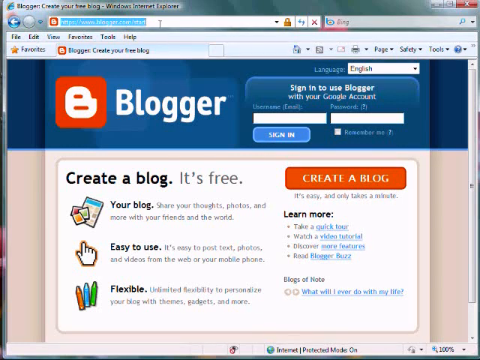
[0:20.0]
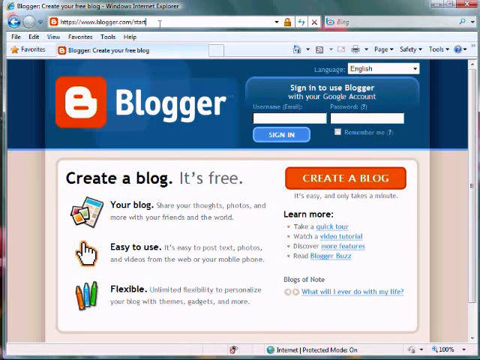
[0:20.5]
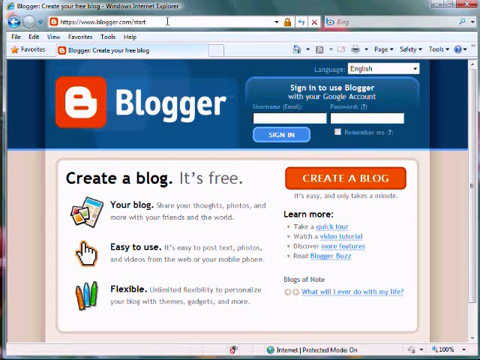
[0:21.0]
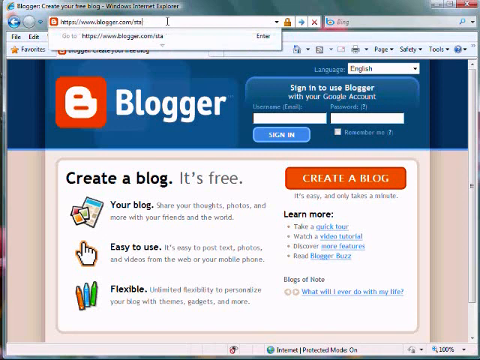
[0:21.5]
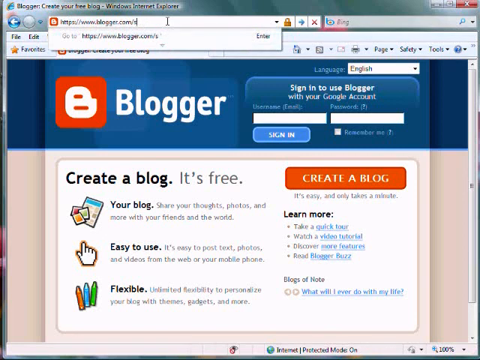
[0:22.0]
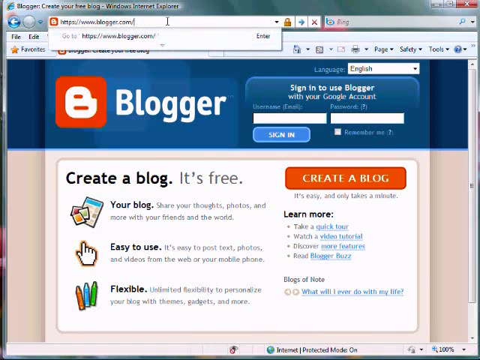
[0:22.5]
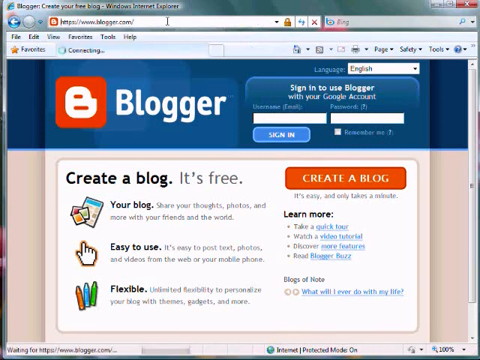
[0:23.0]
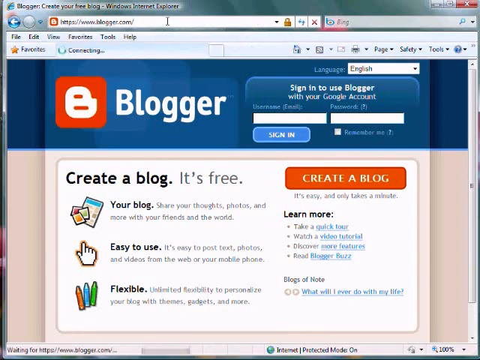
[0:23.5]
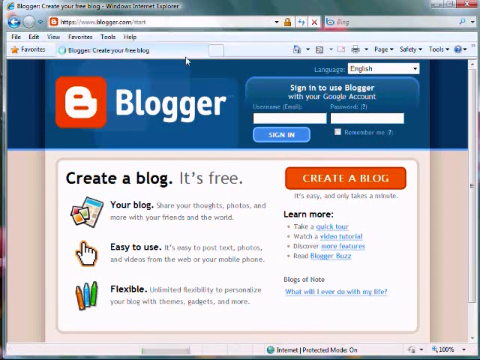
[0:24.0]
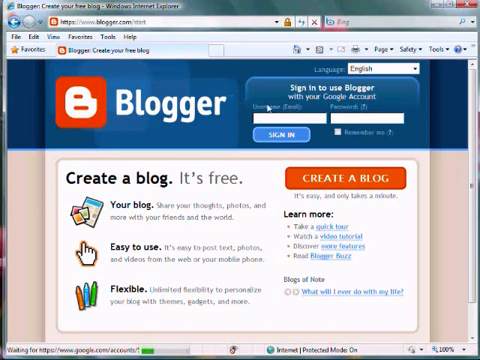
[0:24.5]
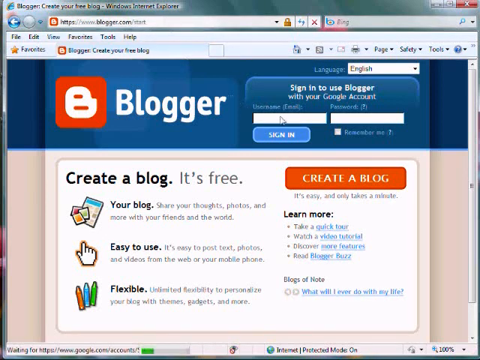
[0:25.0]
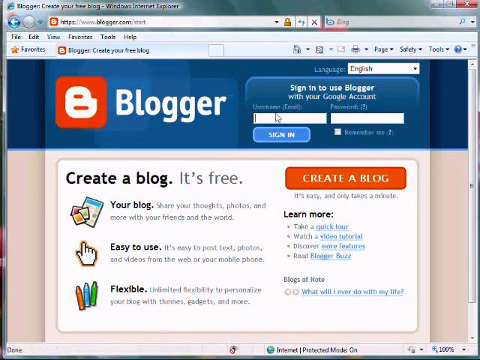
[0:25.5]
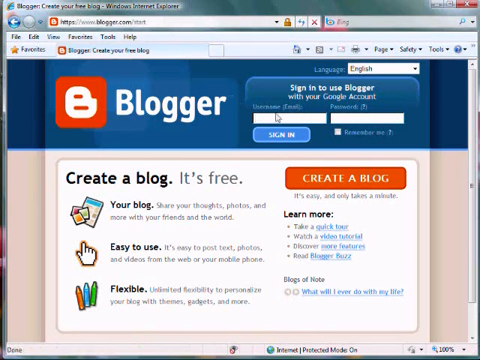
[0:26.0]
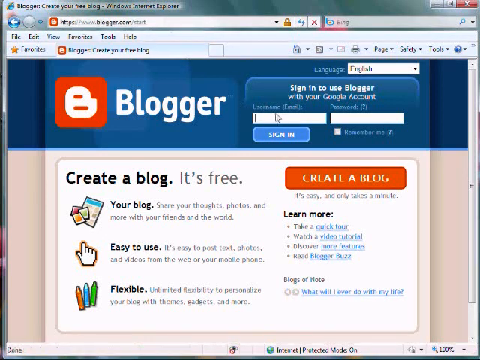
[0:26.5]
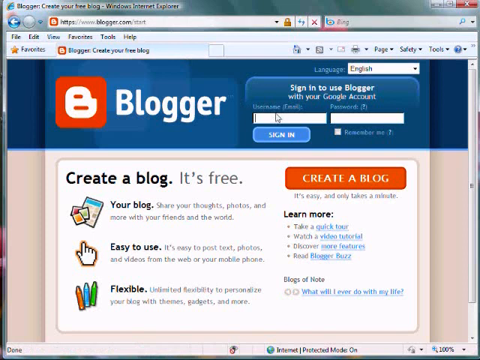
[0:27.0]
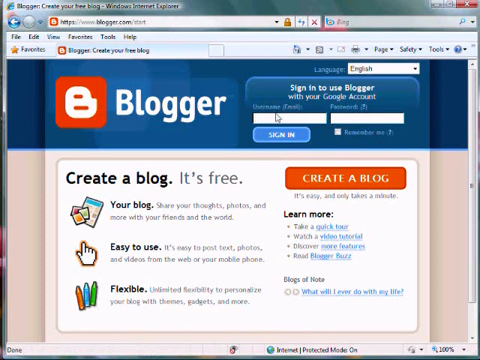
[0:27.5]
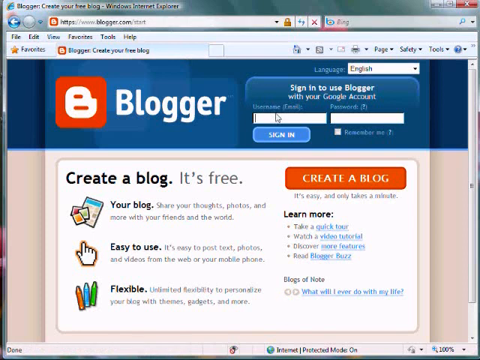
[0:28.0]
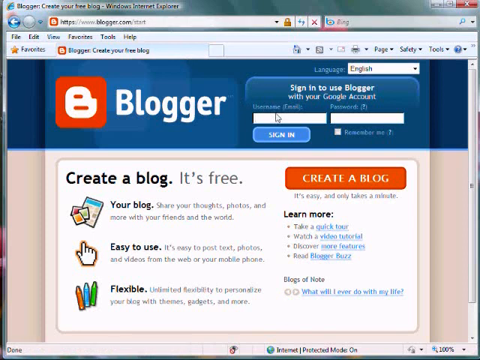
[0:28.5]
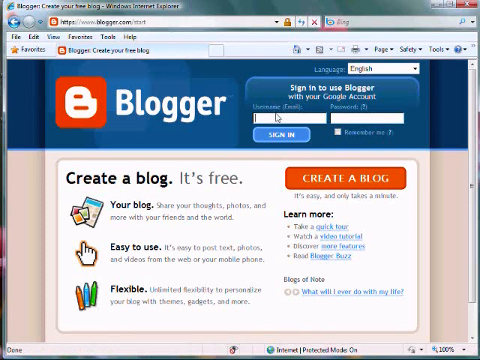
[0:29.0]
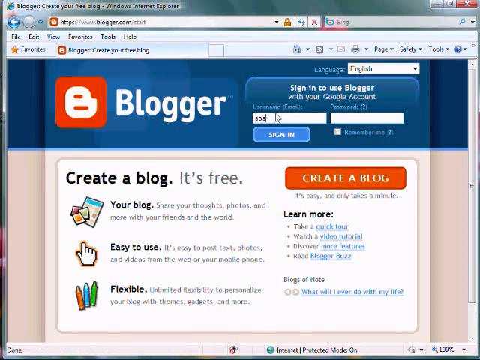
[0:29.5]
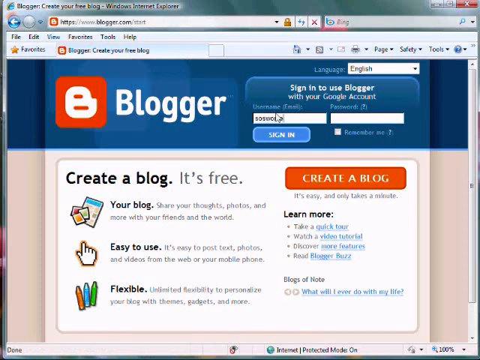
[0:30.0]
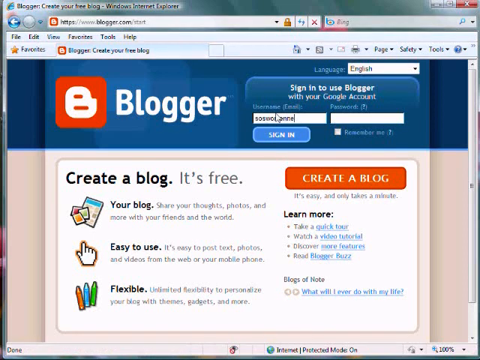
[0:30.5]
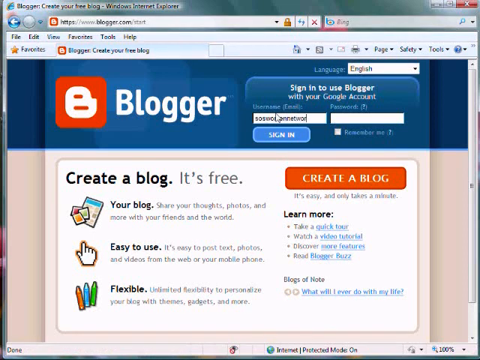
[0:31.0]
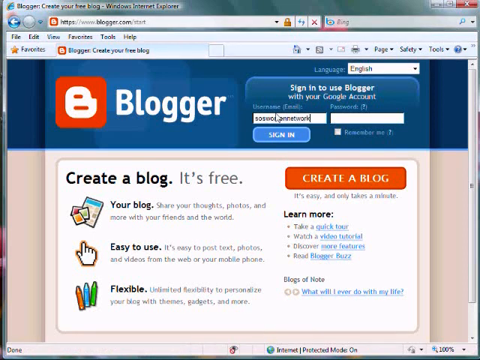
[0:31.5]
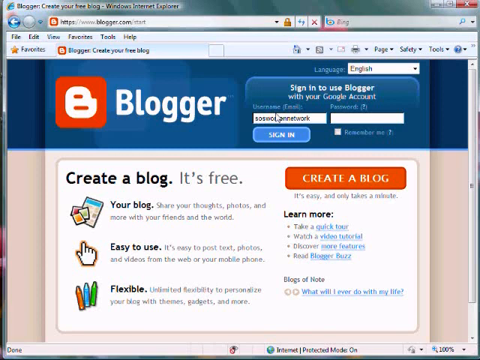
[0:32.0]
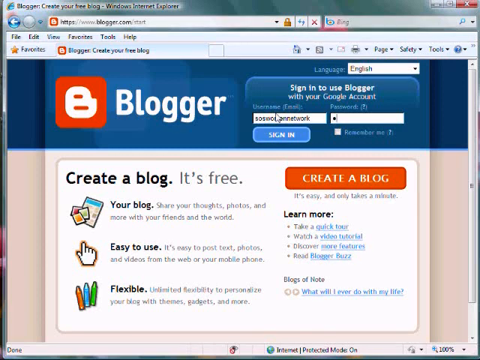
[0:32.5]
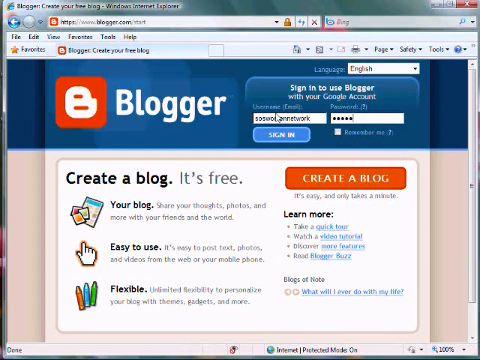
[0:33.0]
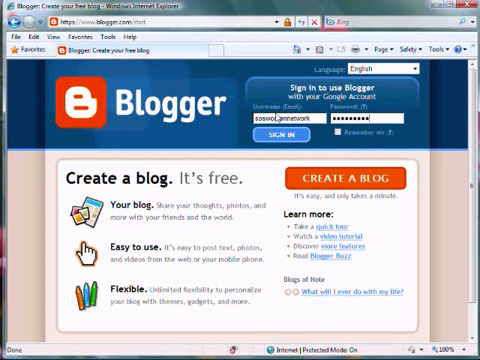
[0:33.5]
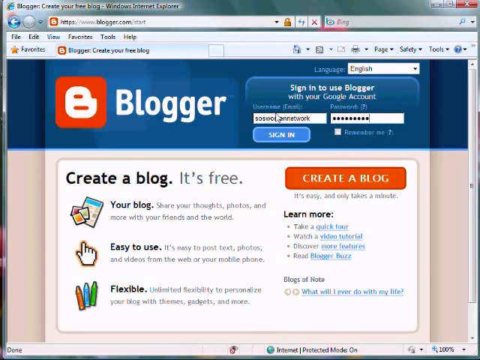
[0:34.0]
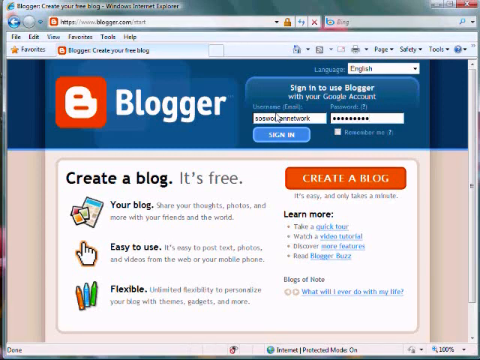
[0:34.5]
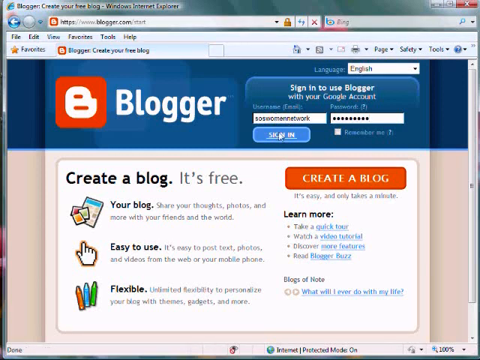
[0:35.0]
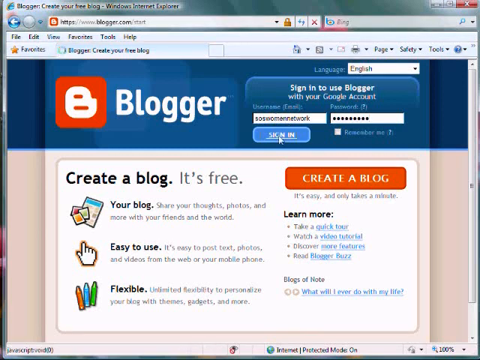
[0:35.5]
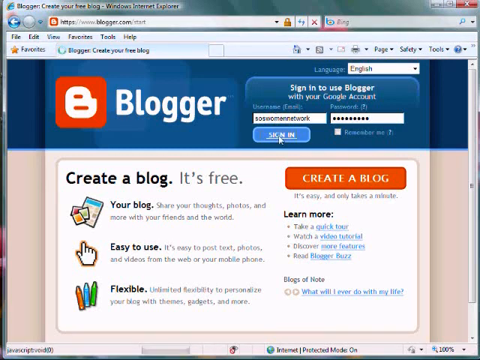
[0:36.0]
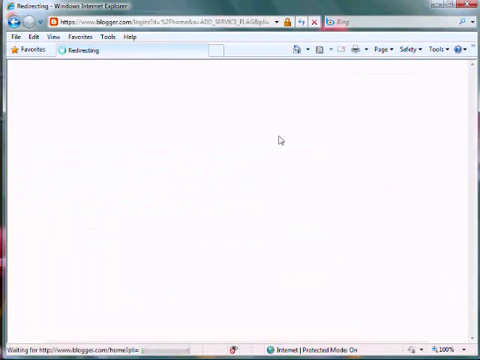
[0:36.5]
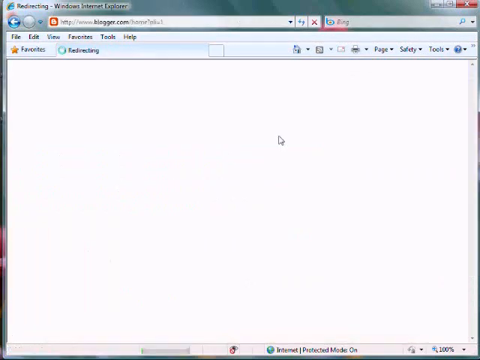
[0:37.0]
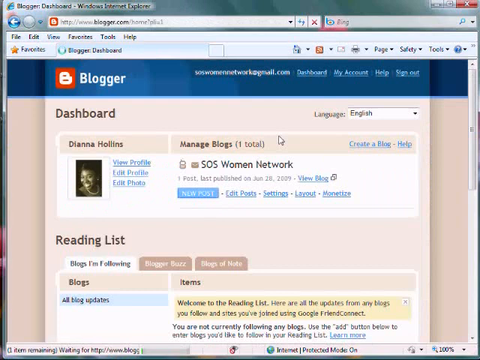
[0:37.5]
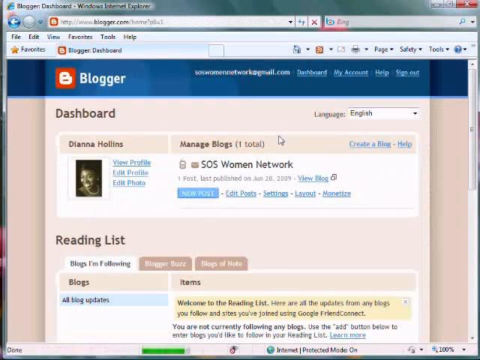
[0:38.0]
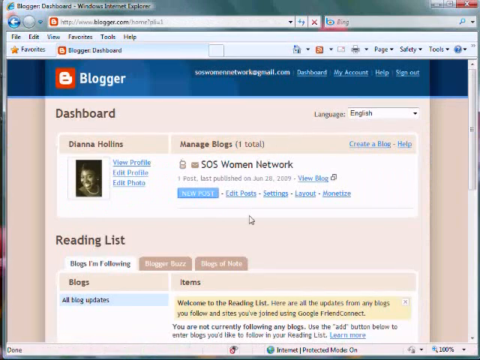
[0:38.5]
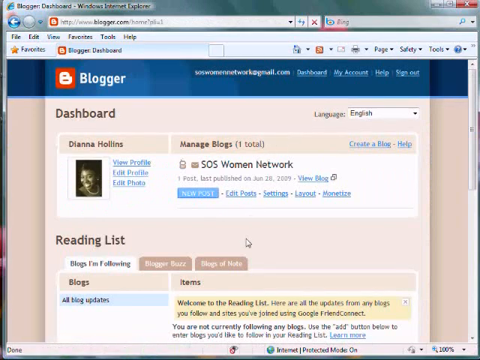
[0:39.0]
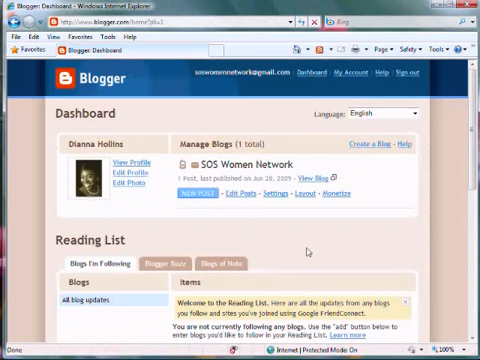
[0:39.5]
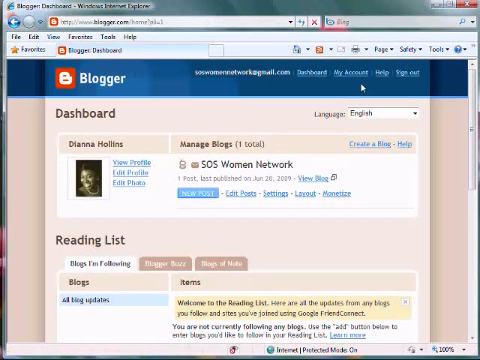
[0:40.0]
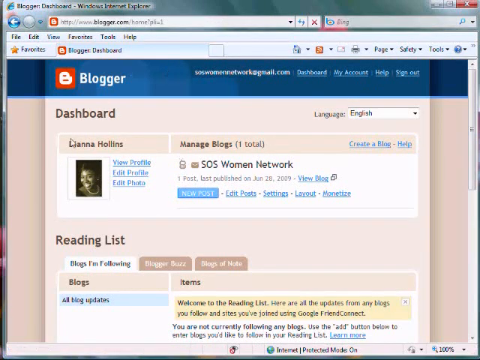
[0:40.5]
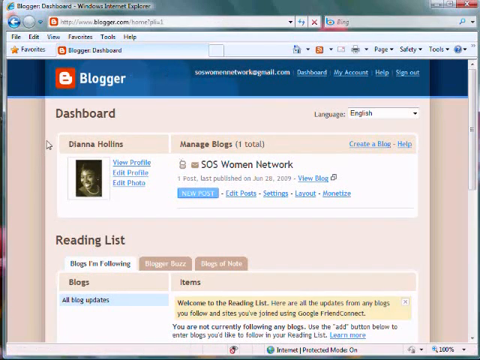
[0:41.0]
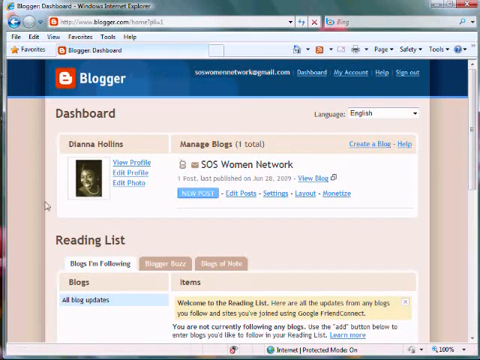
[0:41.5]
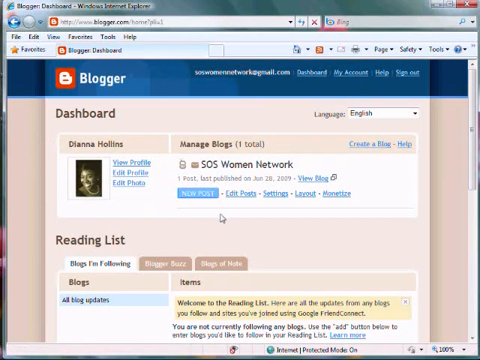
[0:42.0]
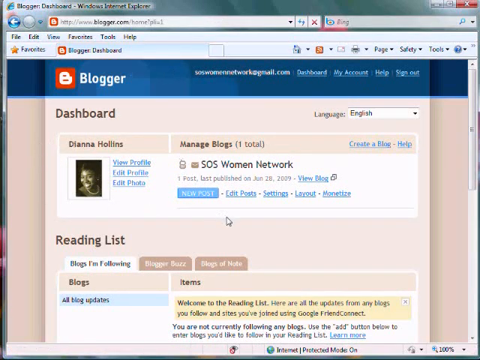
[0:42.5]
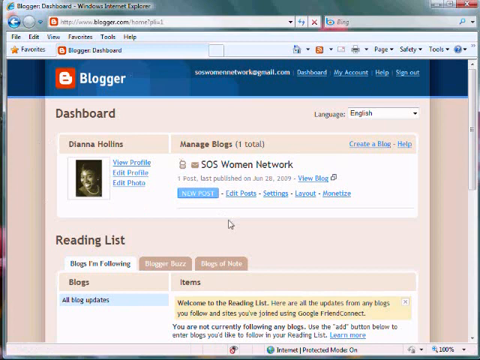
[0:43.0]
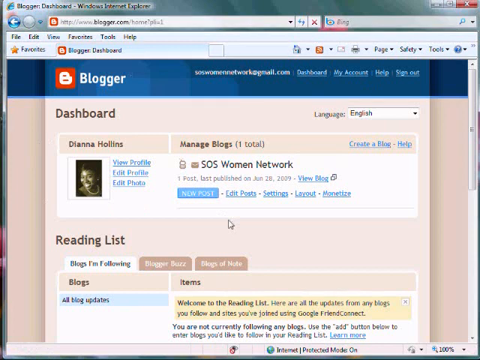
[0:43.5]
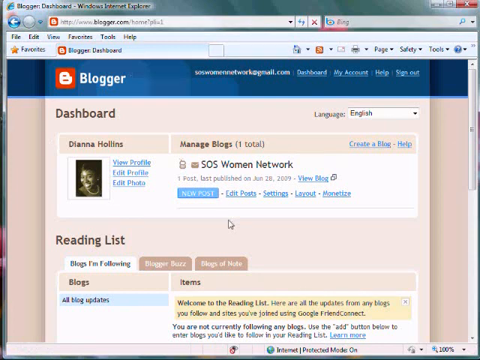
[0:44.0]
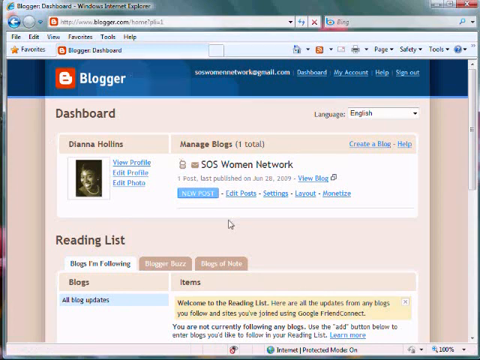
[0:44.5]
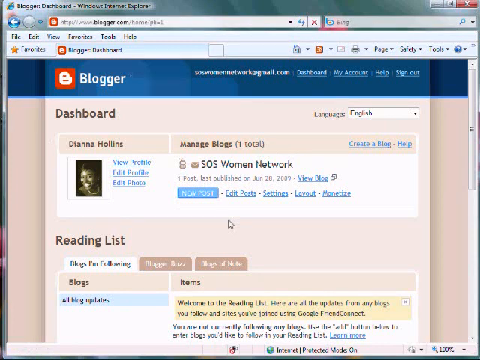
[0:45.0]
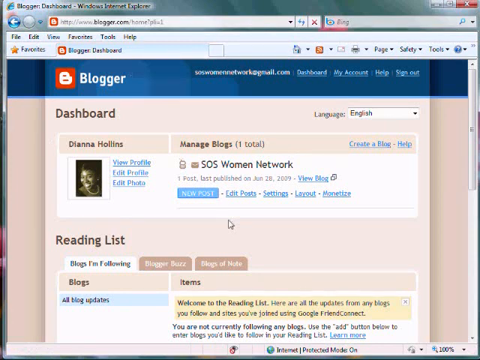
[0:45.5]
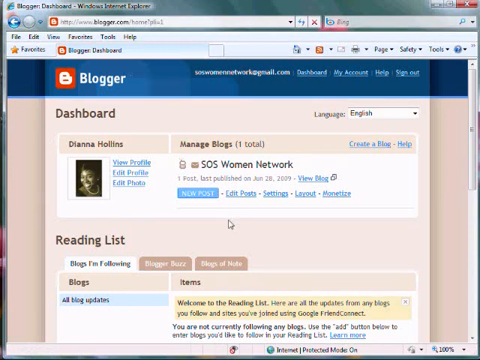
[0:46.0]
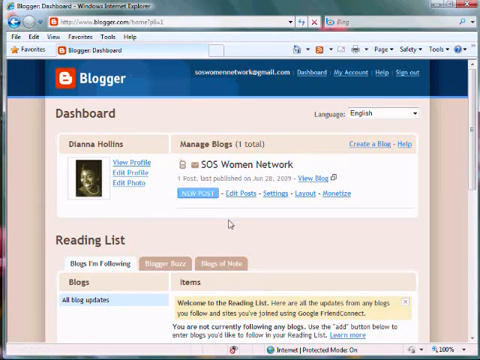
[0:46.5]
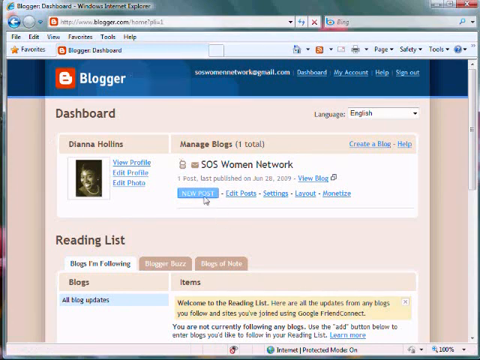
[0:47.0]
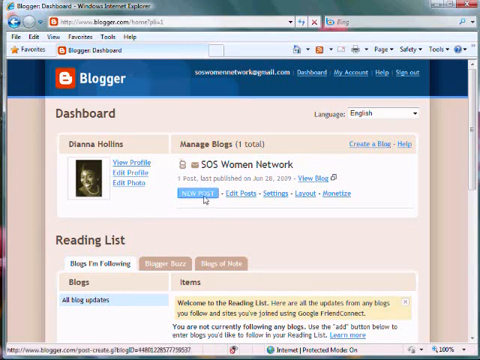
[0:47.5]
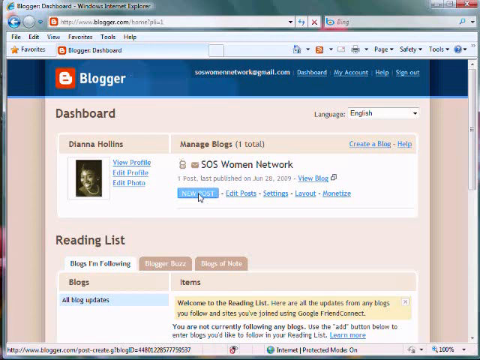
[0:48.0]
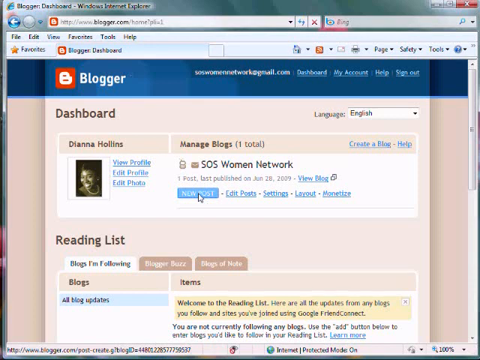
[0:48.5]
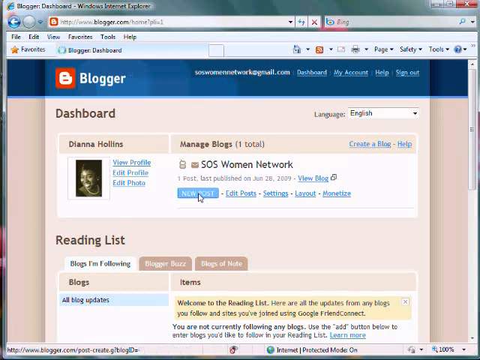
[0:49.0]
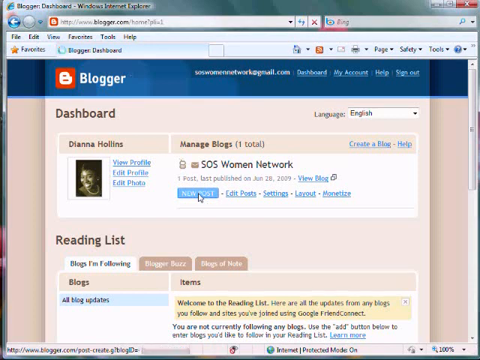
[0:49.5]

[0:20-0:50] With the URL still highlighted, the user clicks into the URL input box so it is no longer highlighted, leaving the cursor there. They remove the word "start" from the URL and press Enter, and the page reloads. When it finishes, the same page is showing and "/start" has reappeared in the URL. The user then enters an email or username into the sign-in area's input box, types a hidden password, and clicks the sign-in button. A Blogger dashboard opens, showing the profile name Diana Hollins and one blog called the SOS Women Network, last published on June 28, 2009. Several actions are available for the blog, such as new post, edit post, settings, layout, and monetize. The cursor hovers over new post and then clicks it.